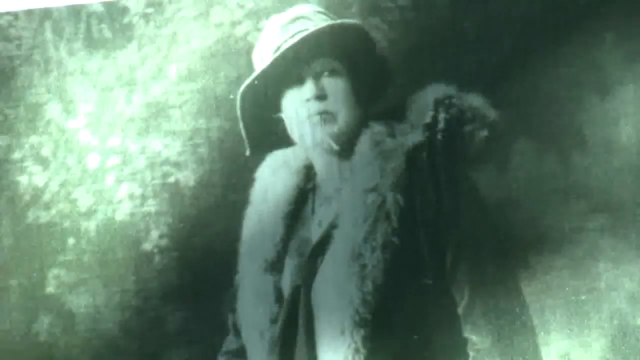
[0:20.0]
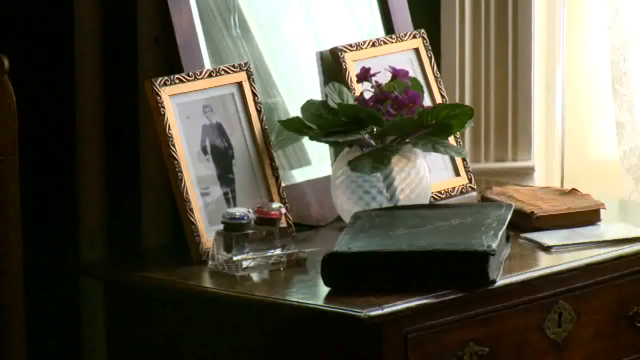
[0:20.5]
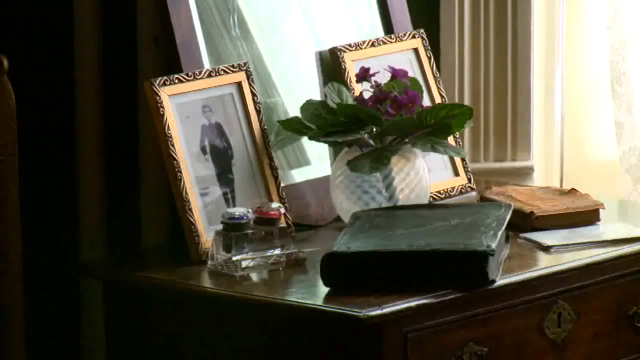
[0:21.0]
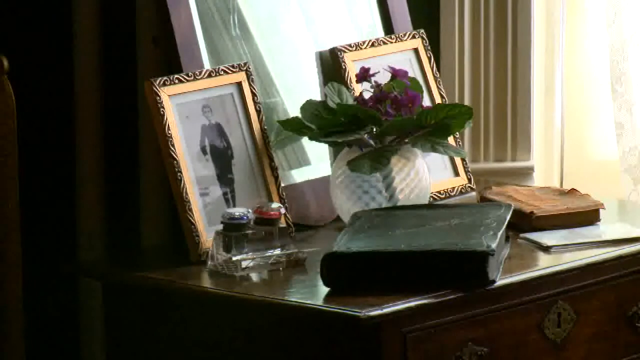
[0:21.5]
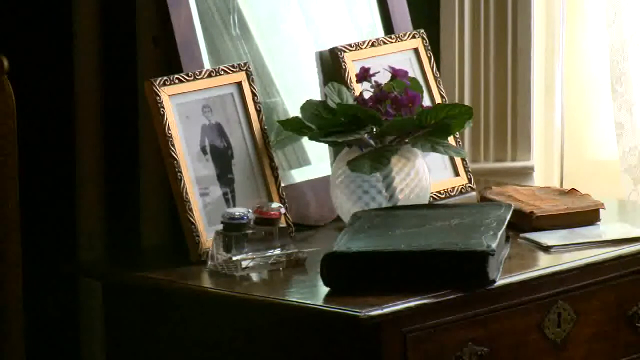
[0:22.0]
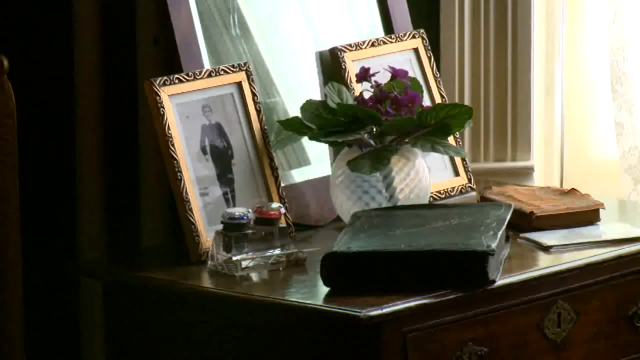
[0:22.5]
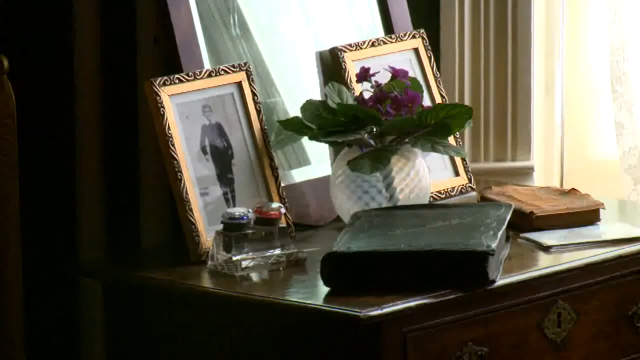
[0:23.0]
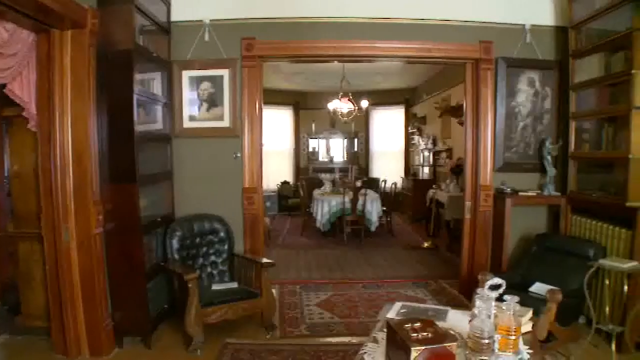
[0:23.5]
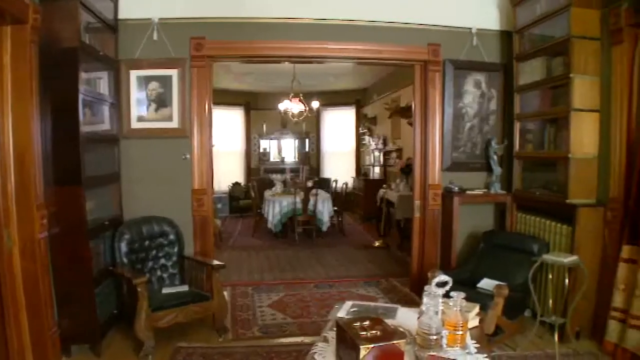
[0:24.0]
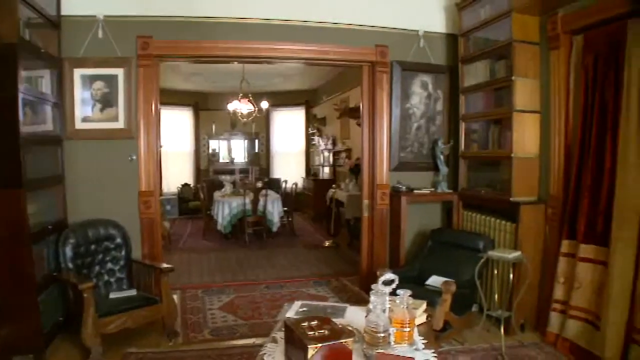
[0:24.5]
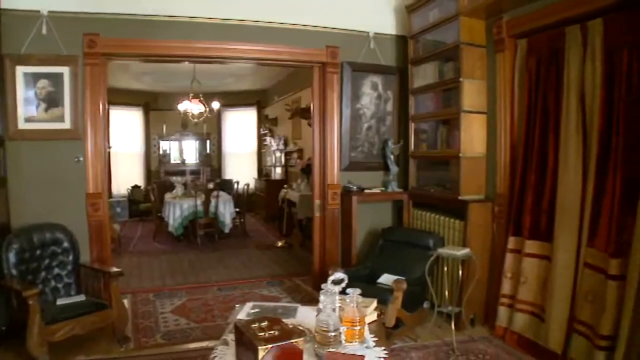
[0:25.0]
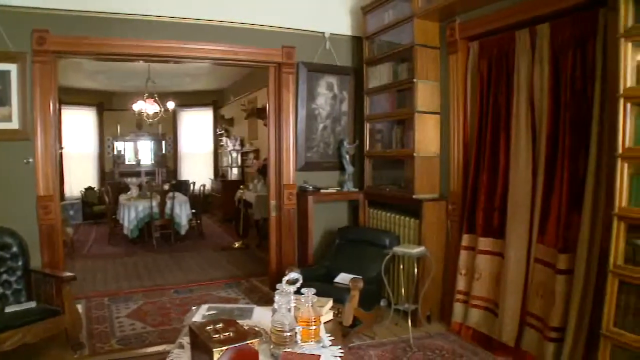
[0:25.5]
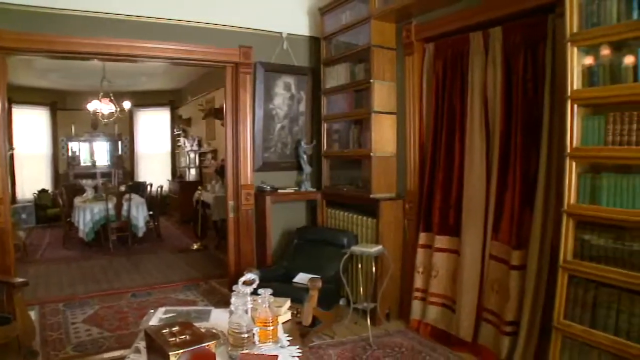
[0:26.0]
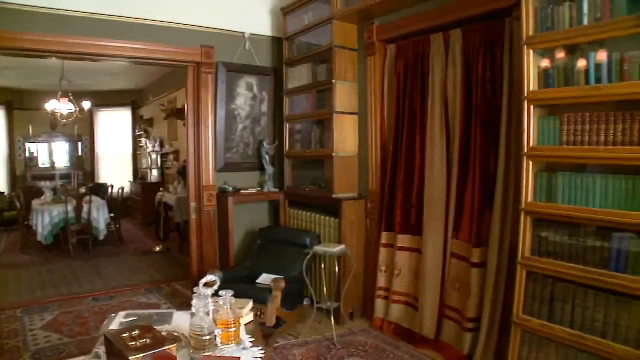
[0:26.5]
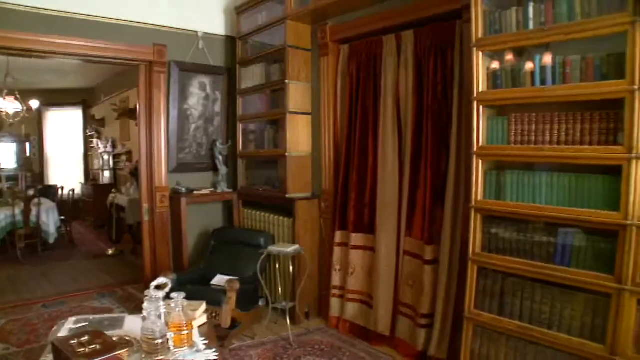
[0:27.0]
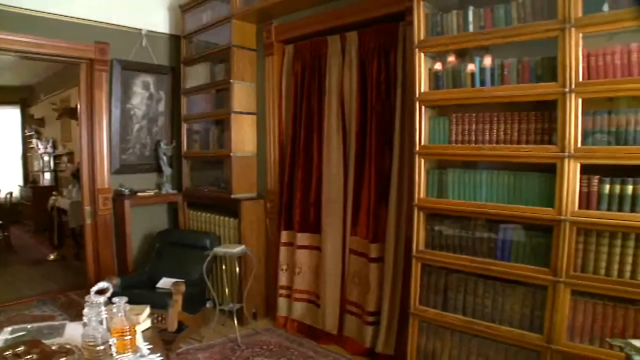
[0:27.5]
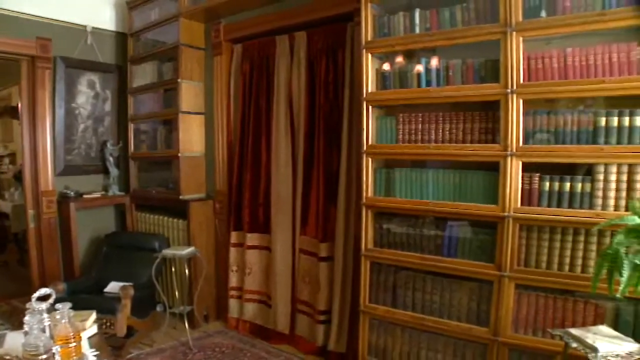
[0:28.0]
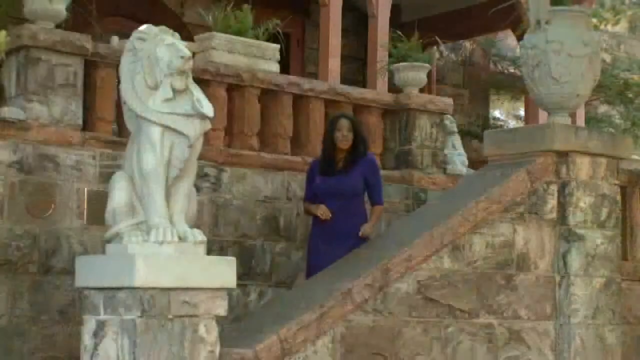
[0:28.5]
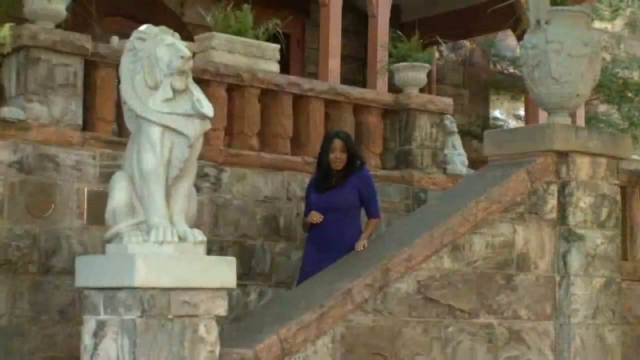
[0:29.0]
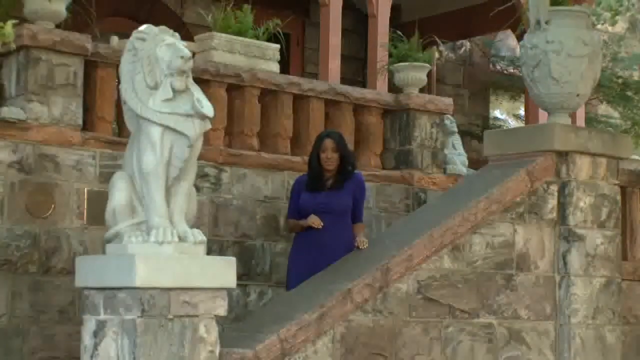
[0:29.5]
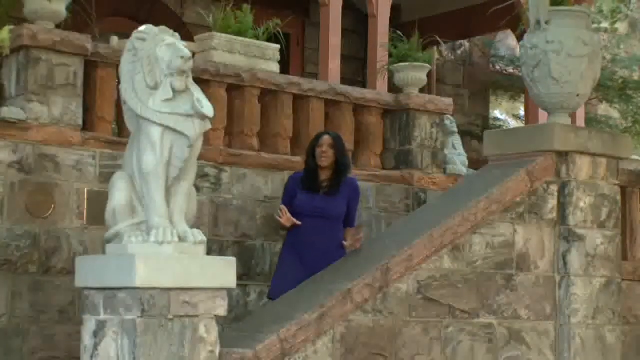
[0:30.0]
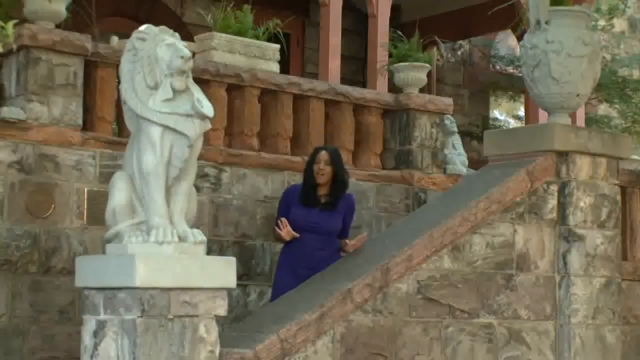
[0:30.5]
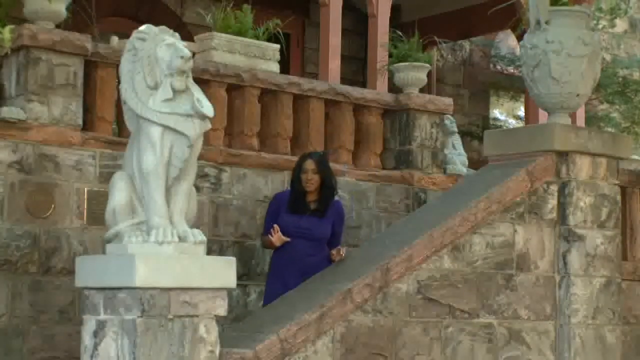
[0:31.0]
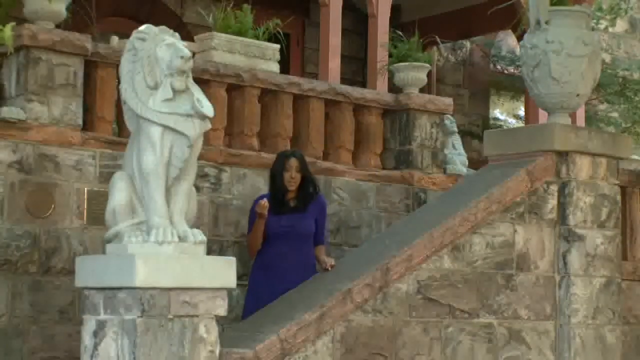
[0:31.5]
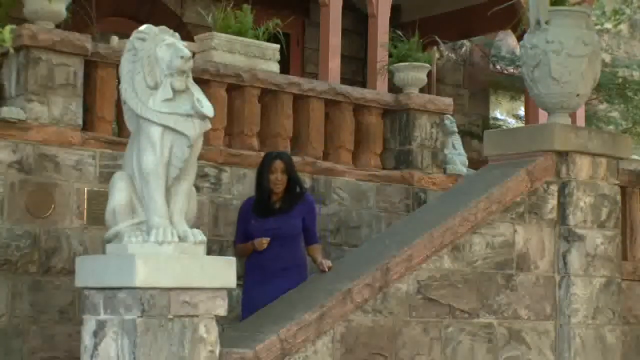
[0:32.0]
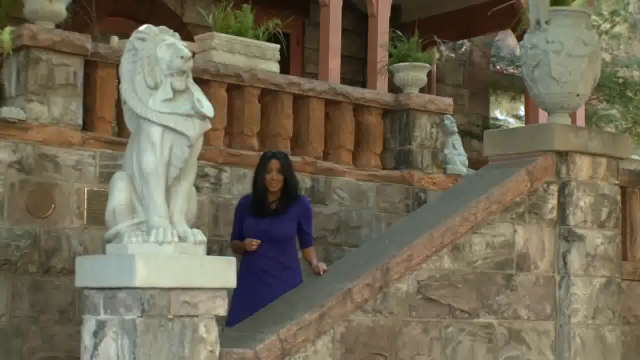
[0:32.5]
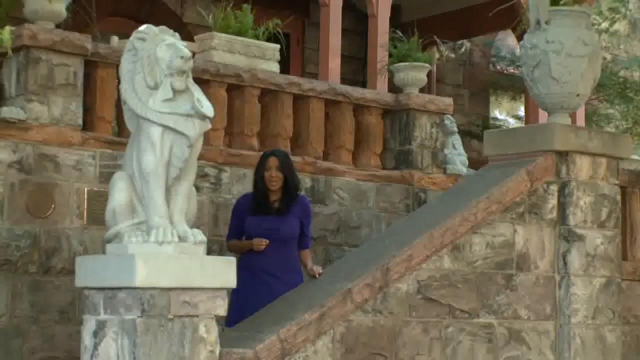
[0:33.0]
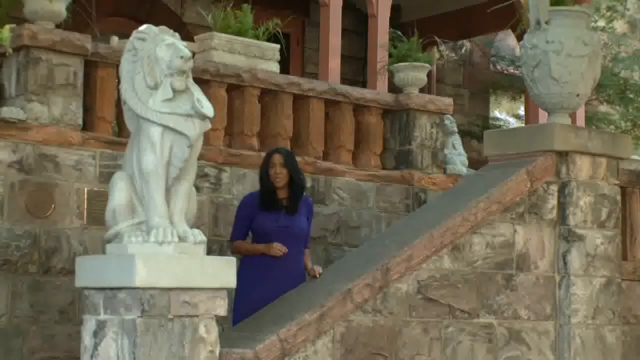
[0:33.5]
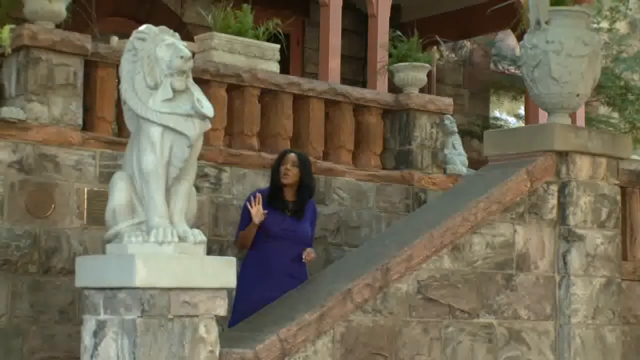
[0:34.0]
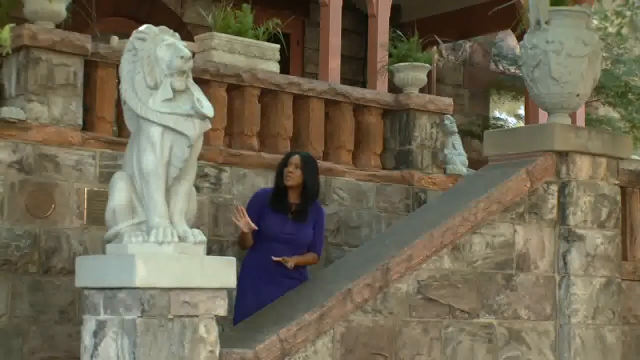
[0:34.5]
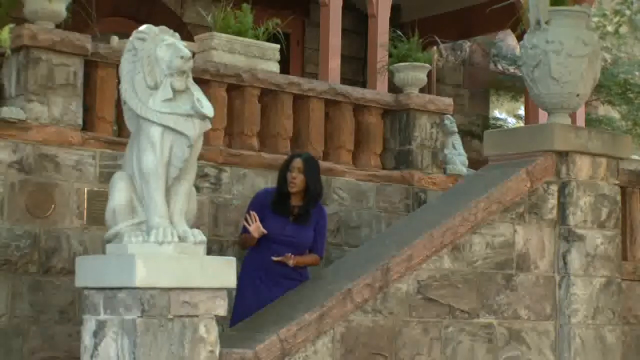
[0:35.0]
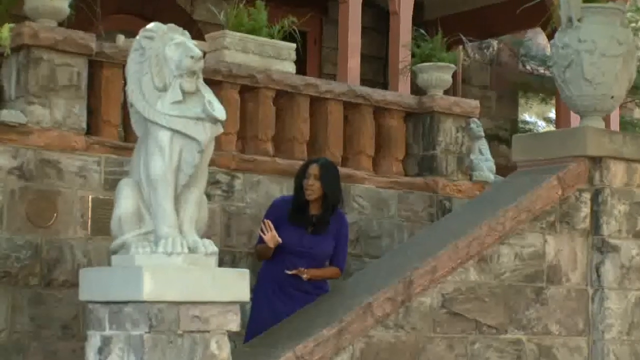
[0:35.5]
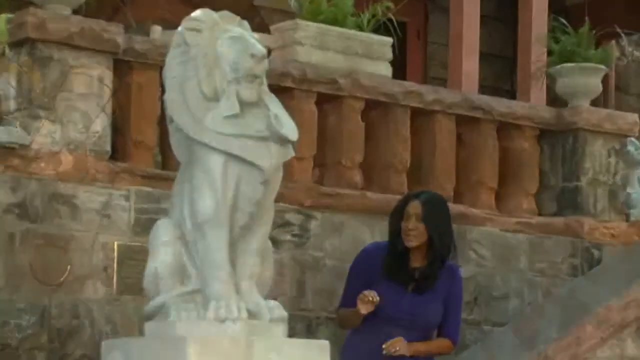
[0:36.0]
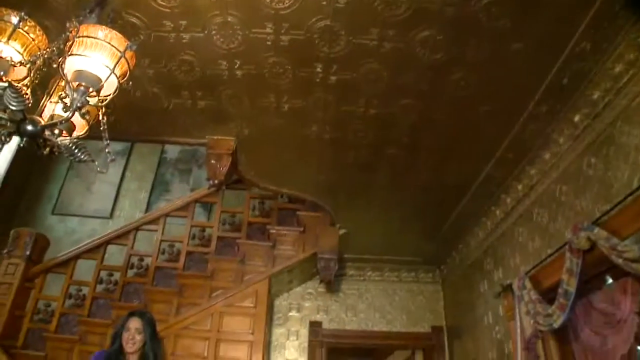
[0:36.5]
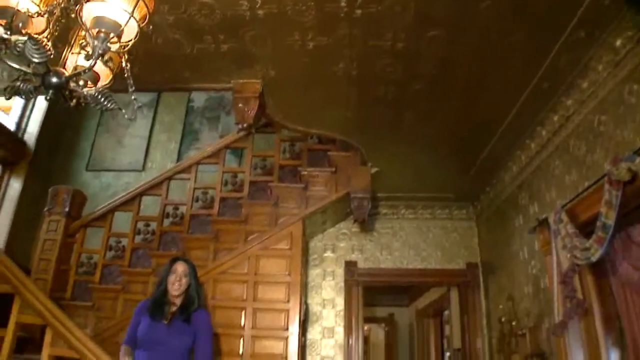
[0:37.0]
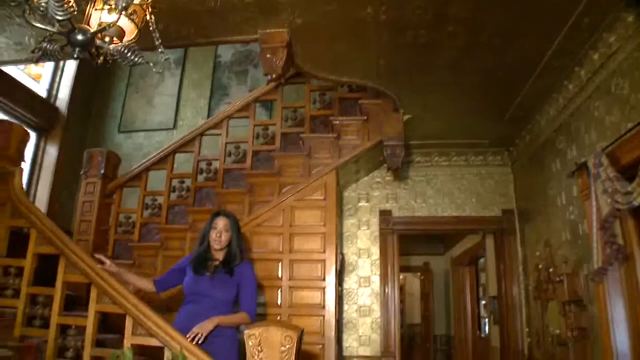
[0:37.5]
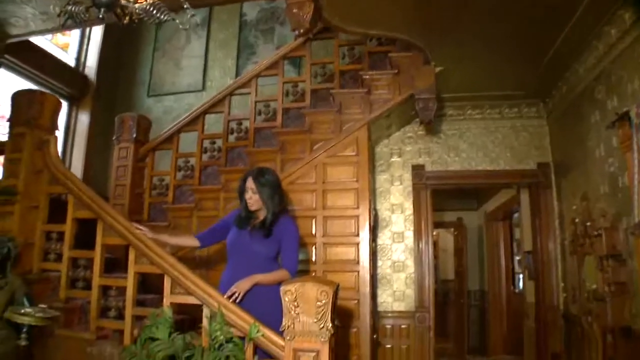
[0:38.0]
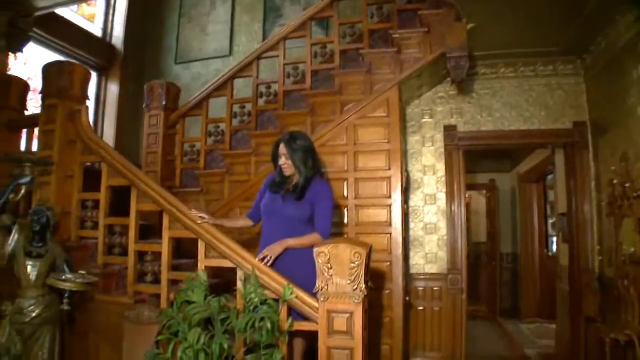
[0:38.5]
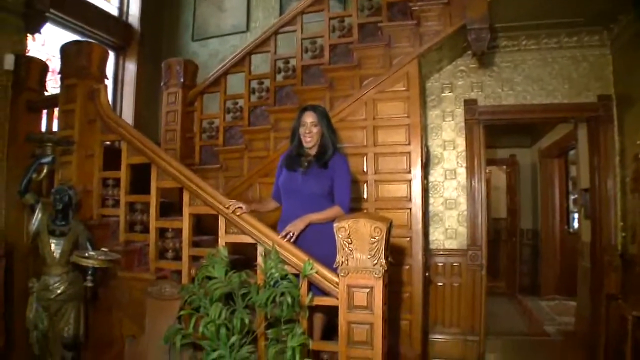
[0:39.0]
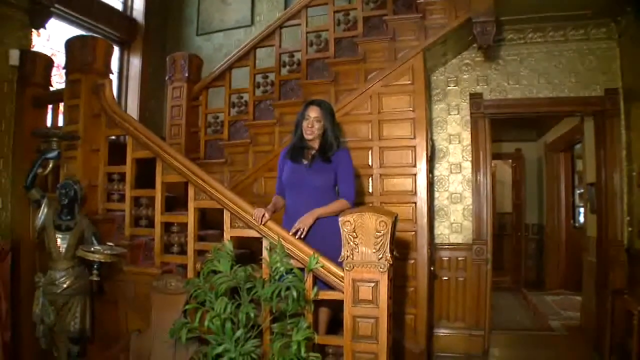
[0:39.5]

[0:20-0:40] The tour moves through the home, showing its ornate woodwork and trim. Lion statues stand outside, and inside there is a wooden staircase. Many framed pictures hang on the walls throughout the home, including pictures of the original owners. There is a library with embossed, leather-bound books, and there is copper on the ceilings and patterned wallpaper. The exterior shows extensive masonry work. Much of the home is kept as it was in its time and appears well preserved.